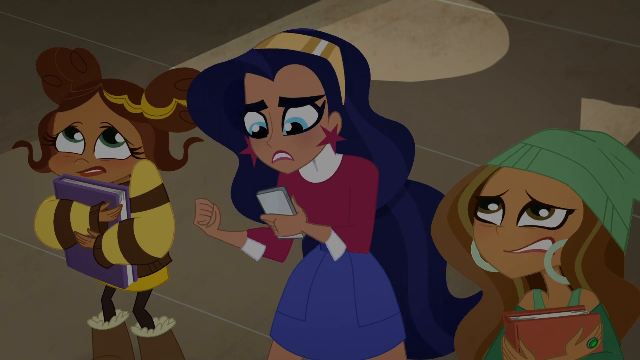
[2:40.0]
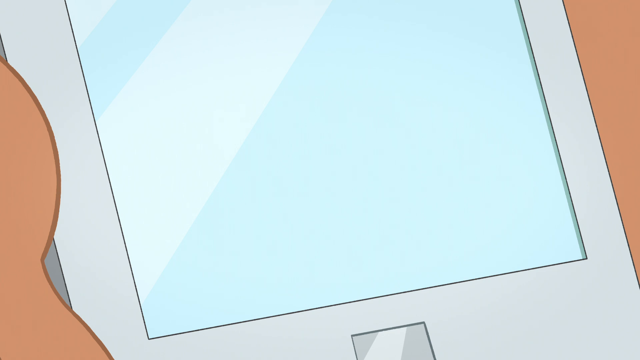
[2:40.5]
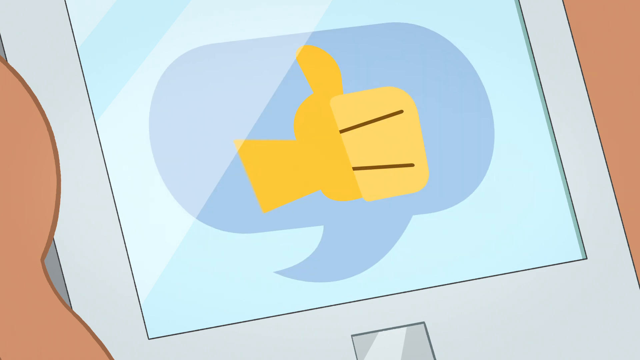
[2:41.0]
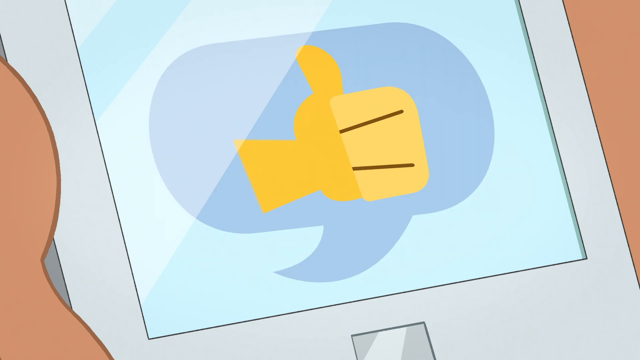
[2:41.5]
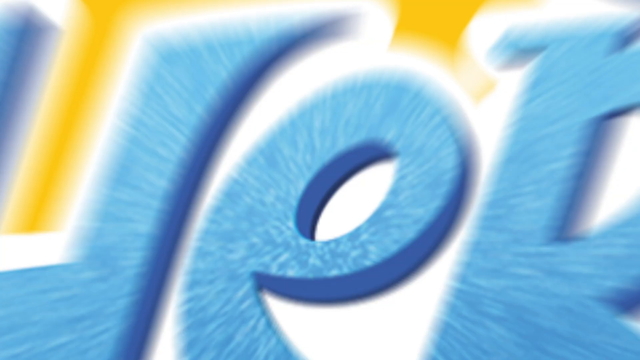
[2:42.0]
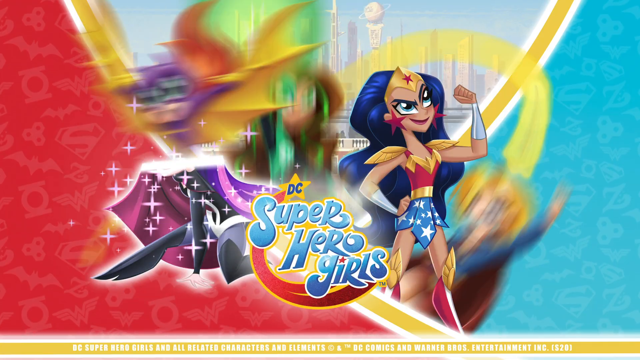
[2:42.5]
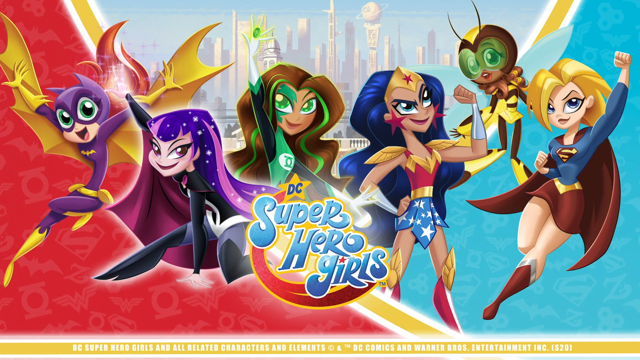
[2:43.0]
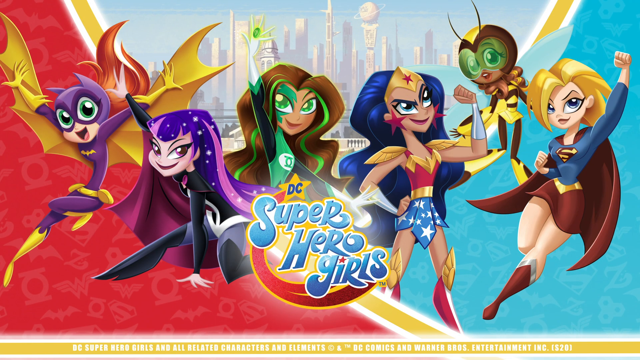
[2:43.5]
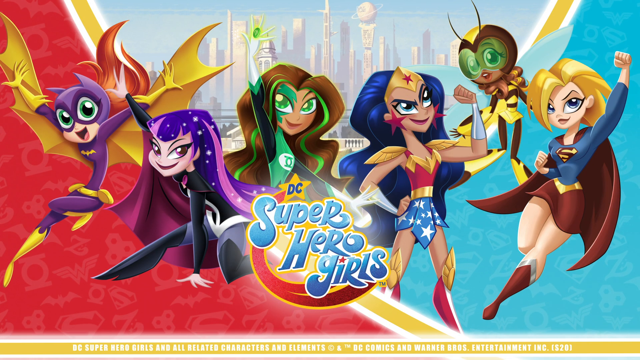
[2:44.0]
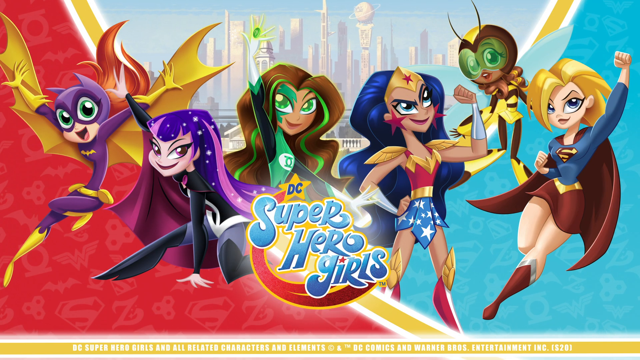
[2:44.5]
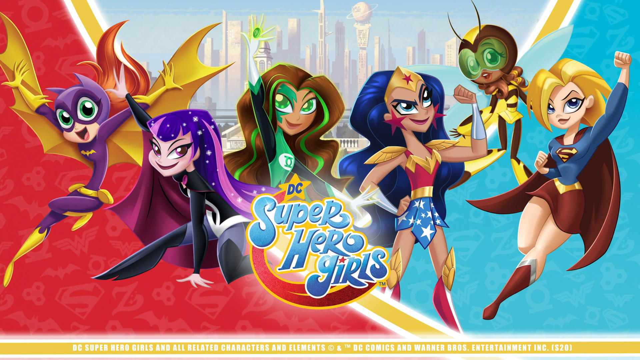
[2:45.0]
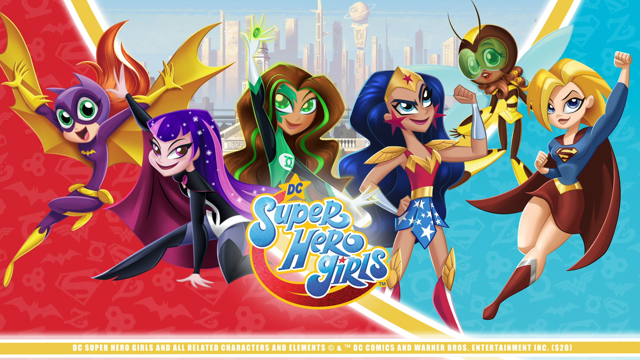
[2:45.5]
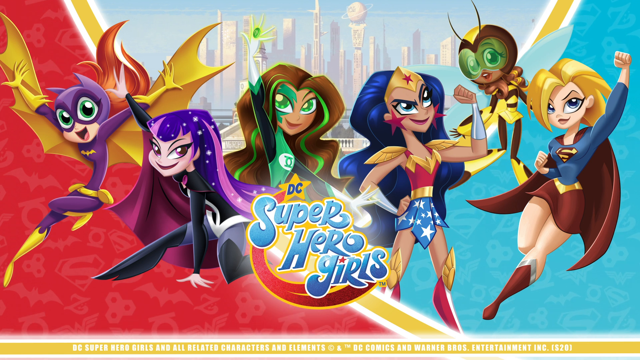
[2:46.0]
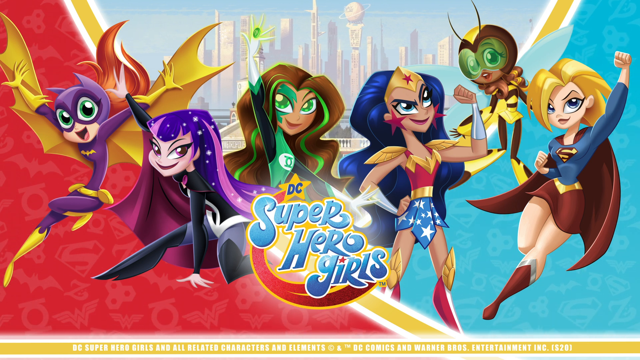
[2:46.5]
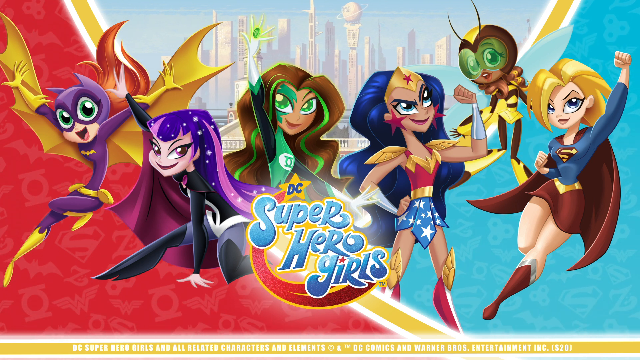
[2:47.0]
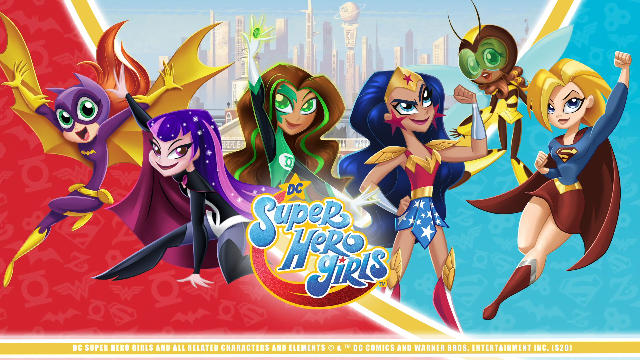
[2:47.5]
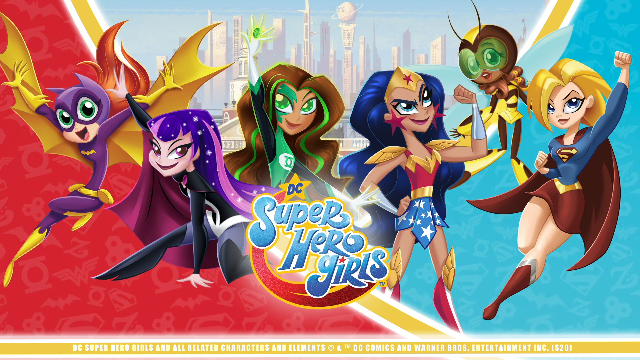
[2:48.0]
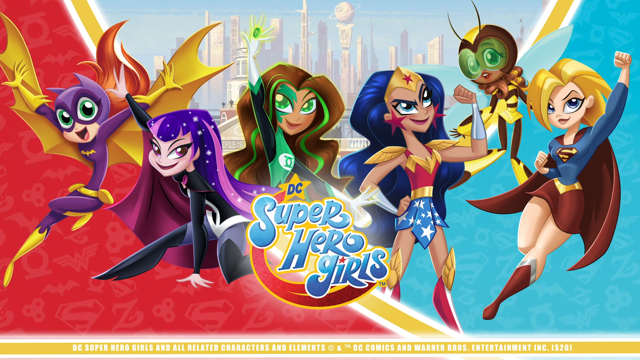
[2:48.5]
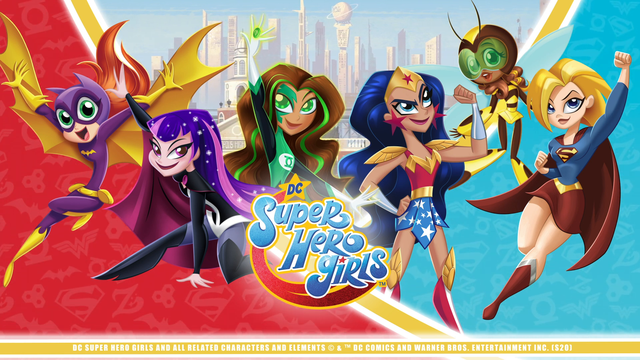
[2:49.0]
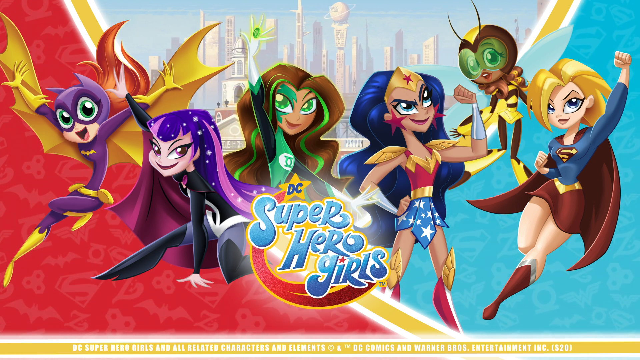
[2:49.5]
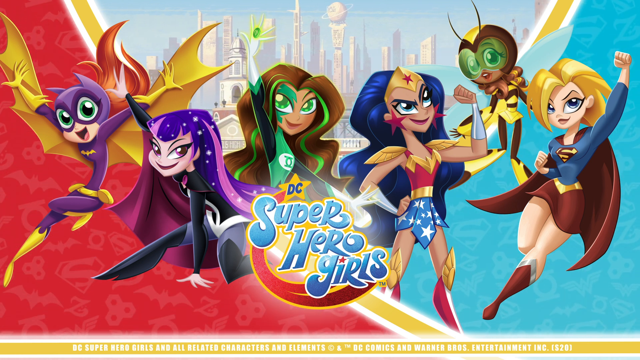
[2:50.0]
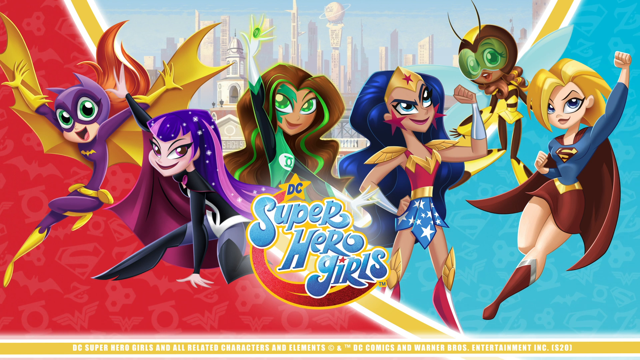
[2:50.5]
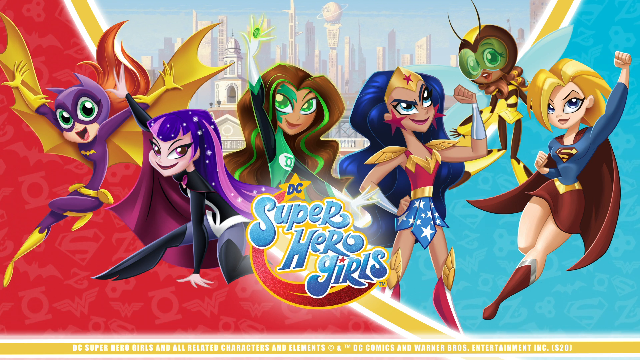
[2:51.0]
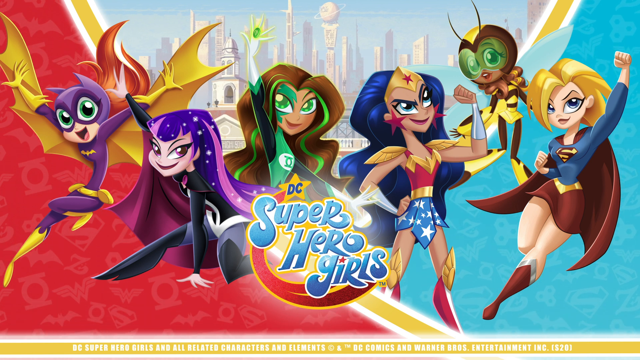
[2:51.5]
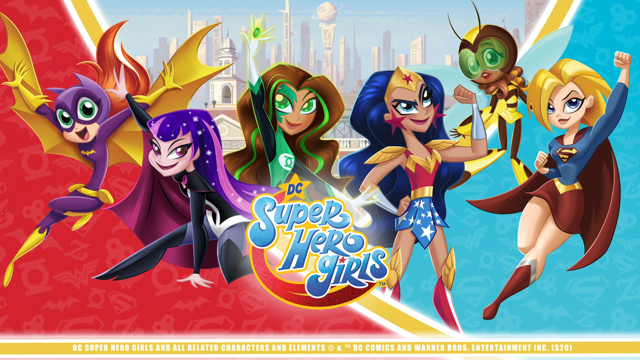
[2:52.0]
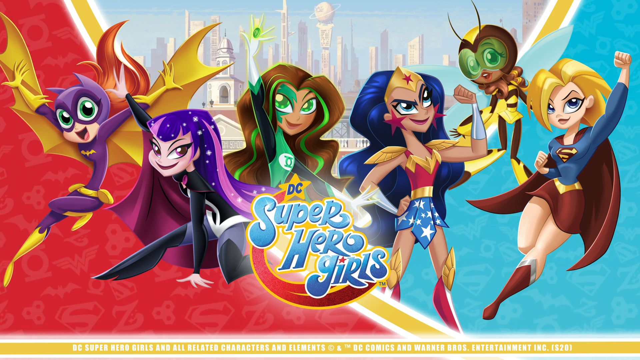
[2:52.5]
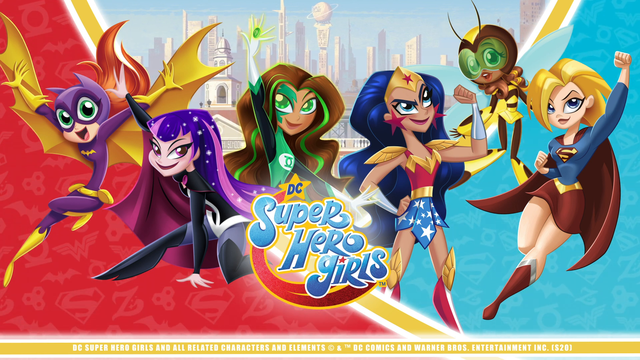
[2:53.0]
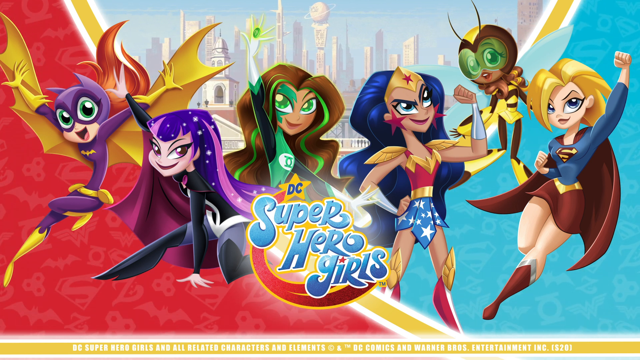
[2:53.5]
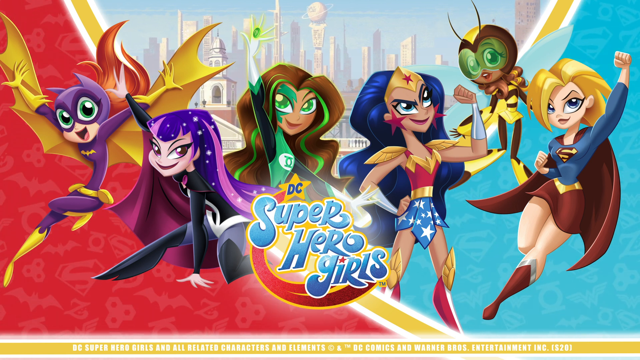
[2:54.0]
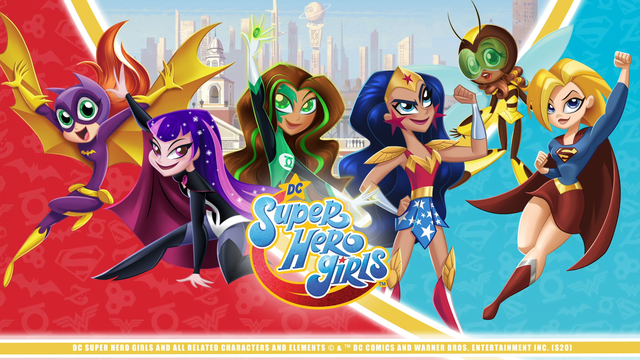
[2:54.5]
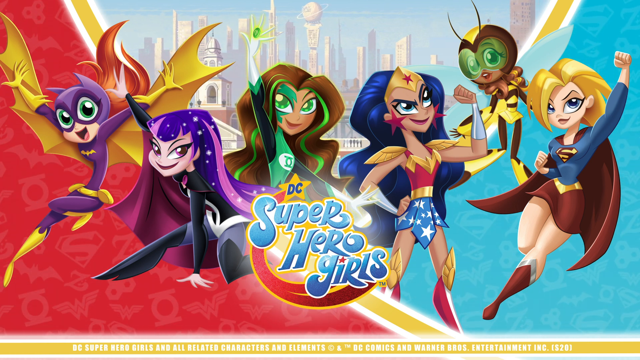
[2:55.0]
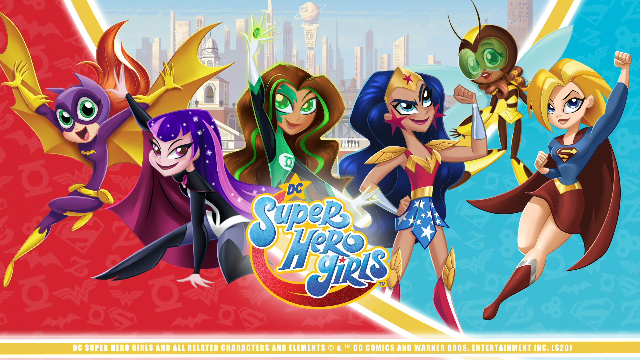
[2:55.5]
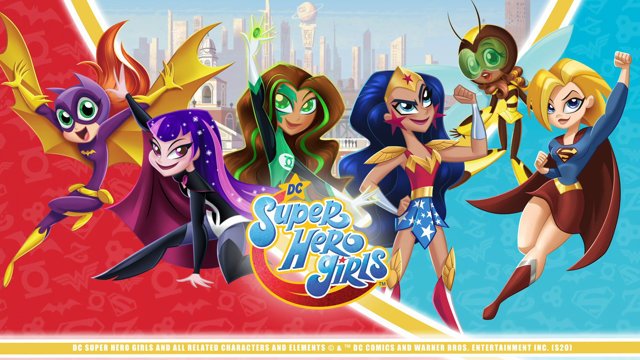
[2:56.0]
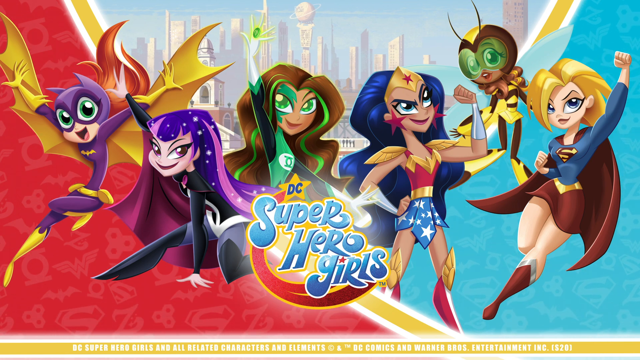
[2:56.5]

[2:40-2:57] The blue-haired girl looks at her cell phone, having just received a thumbs-up message from Batgirl. The ending of the cartoon, DC Superhero Girls, follows: Batgirl is on the left, what looks like a Green Lantern girl is in the middle, there is a Wonder Woman character, Supergirl is on the right, and there are two other unidentified characters. A city is in the background. The final scene and the final logo are cartoon drawings.